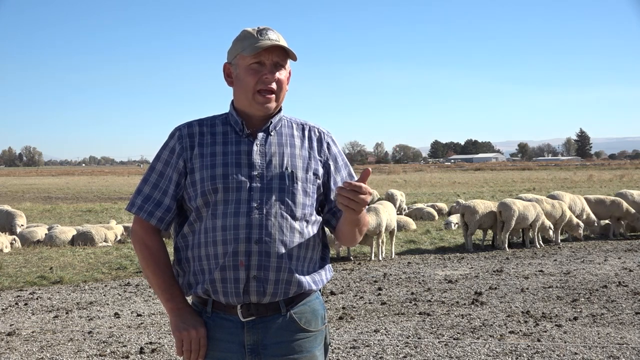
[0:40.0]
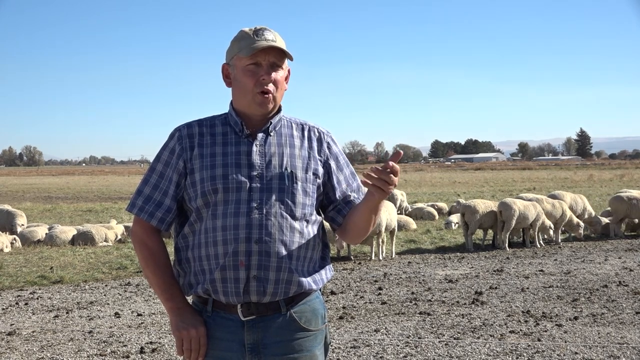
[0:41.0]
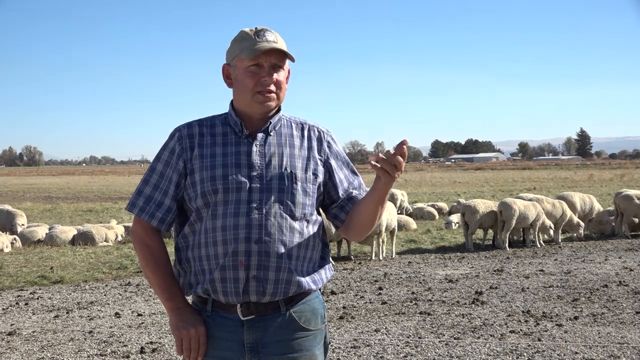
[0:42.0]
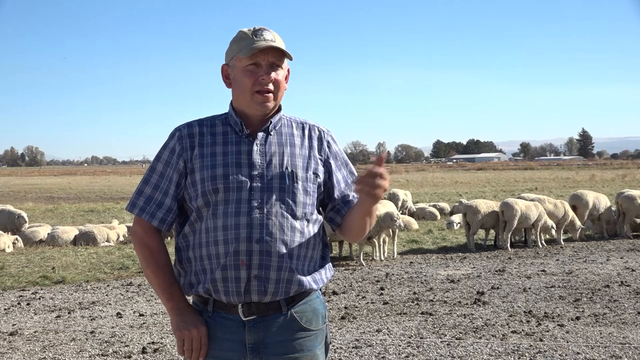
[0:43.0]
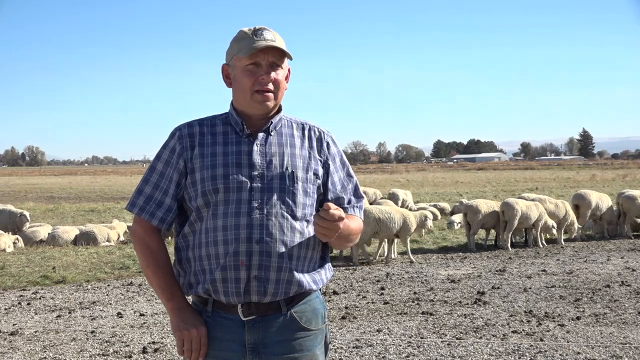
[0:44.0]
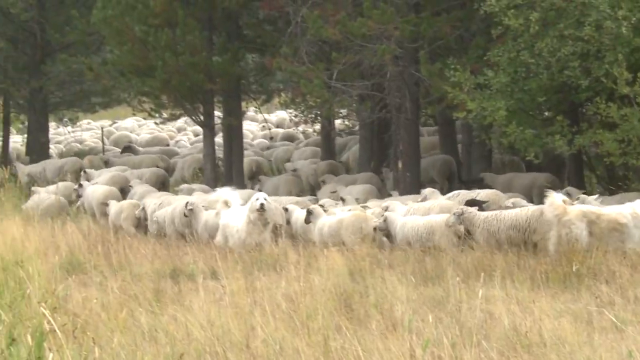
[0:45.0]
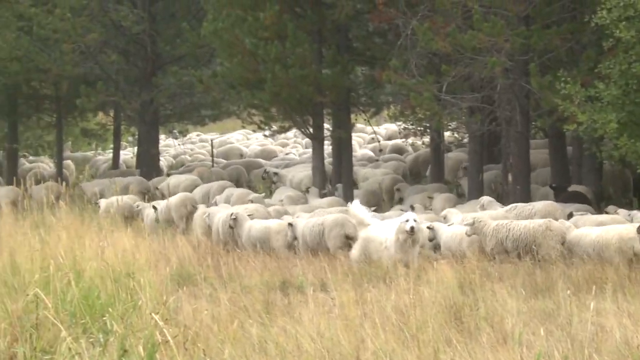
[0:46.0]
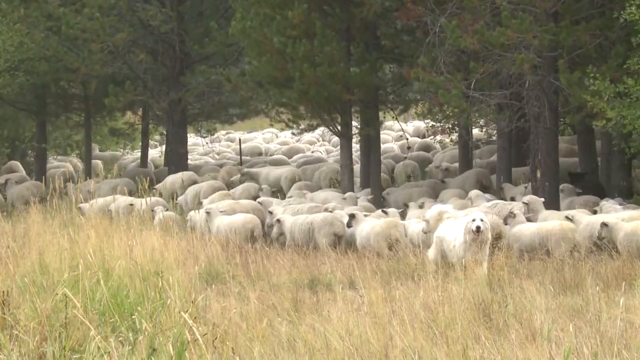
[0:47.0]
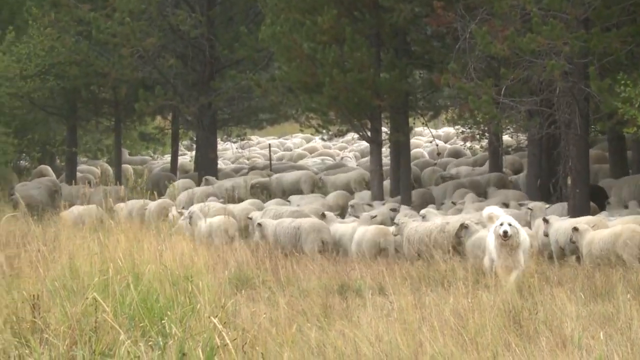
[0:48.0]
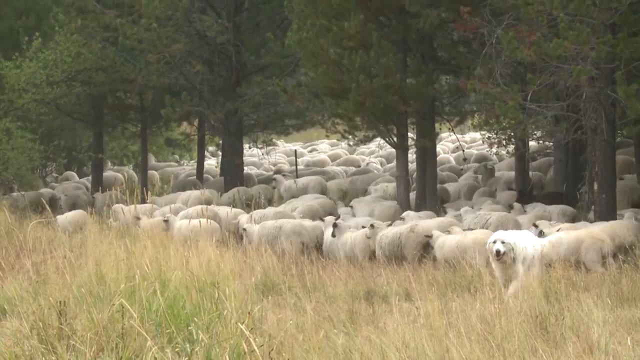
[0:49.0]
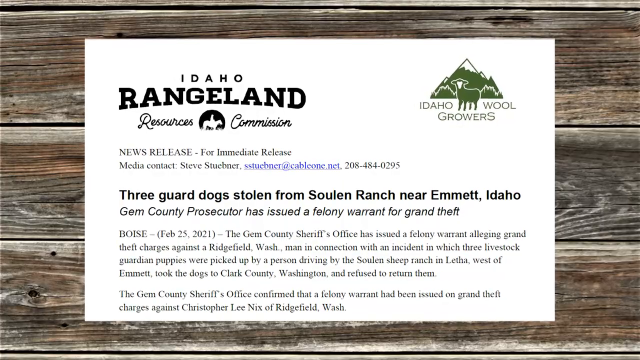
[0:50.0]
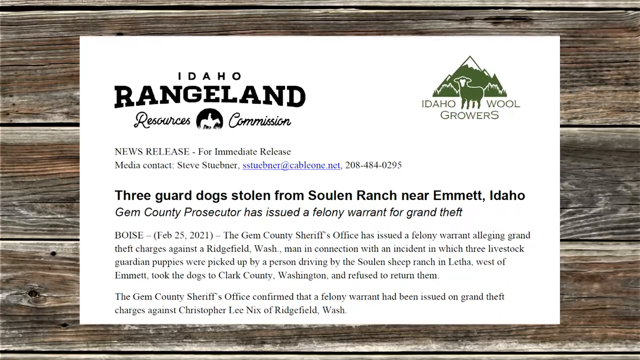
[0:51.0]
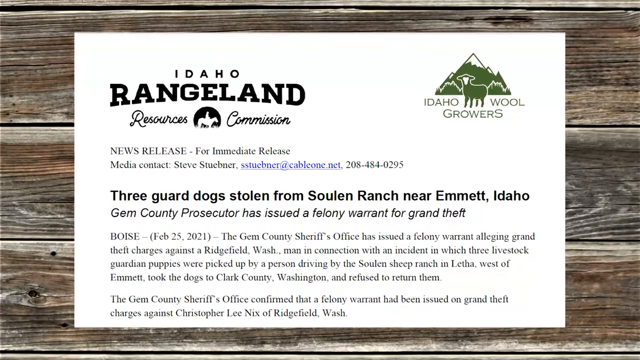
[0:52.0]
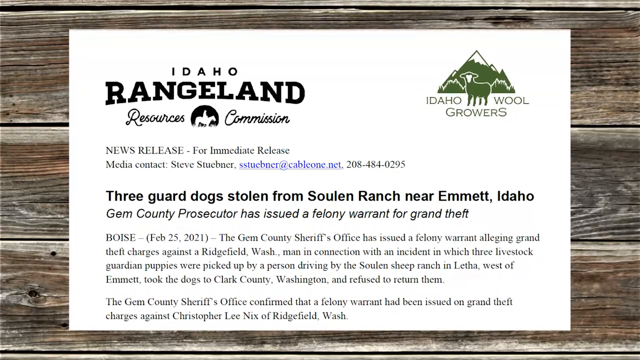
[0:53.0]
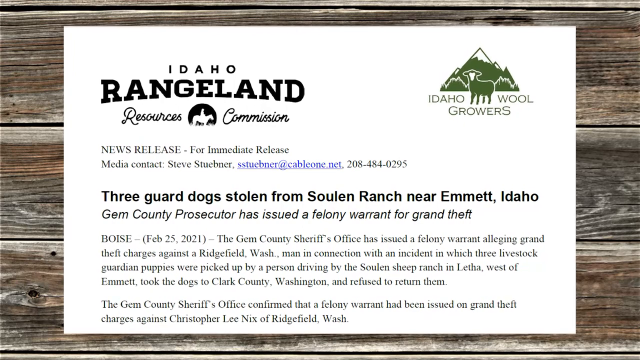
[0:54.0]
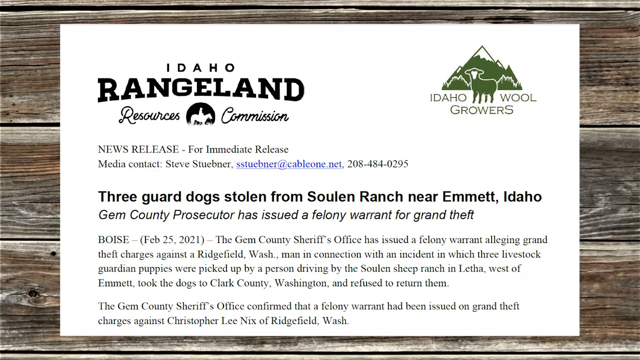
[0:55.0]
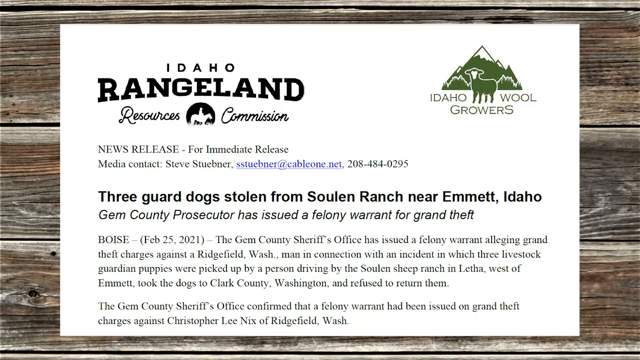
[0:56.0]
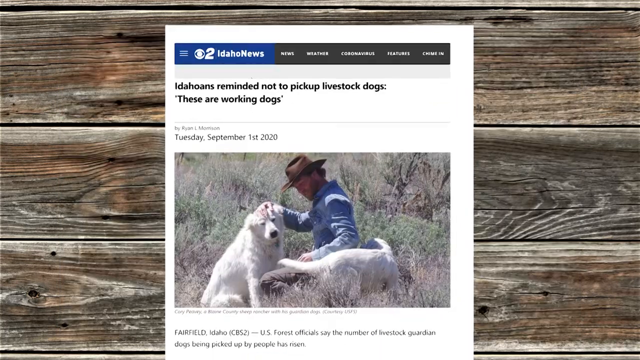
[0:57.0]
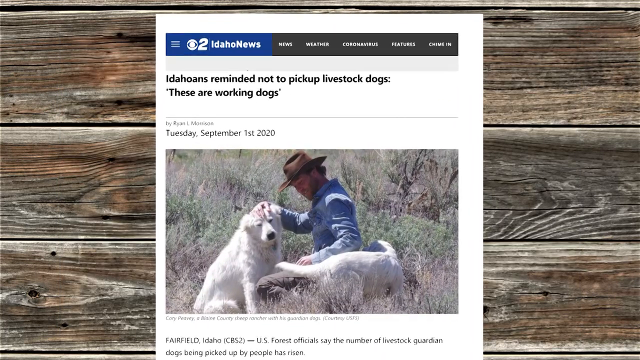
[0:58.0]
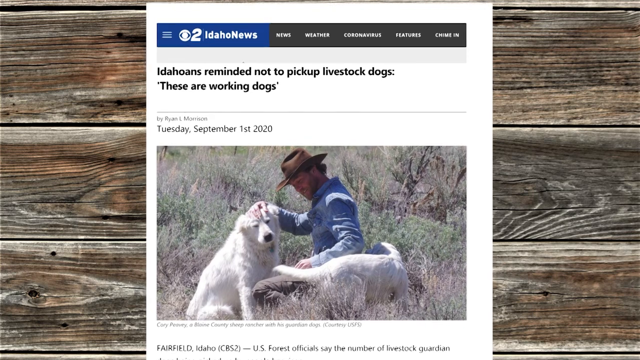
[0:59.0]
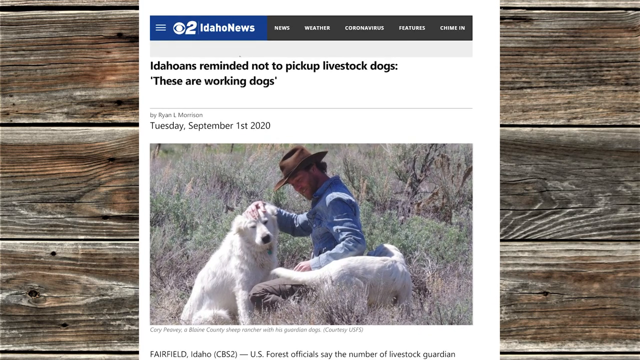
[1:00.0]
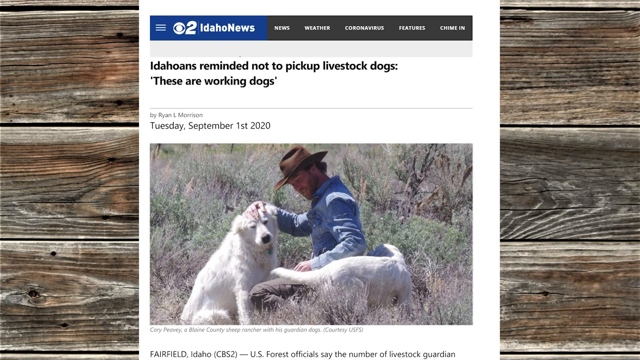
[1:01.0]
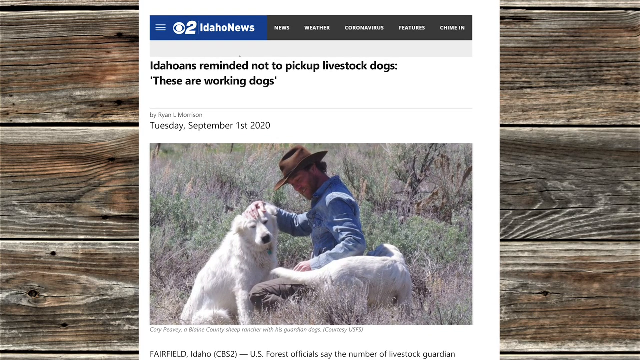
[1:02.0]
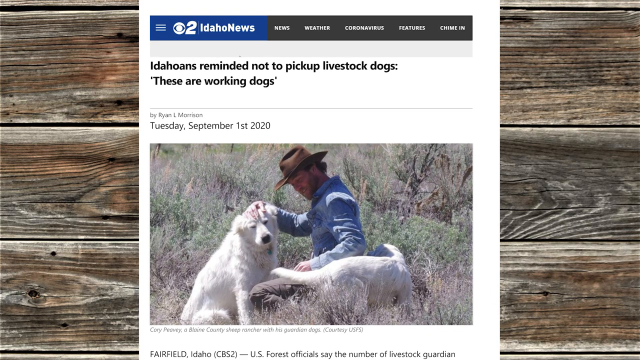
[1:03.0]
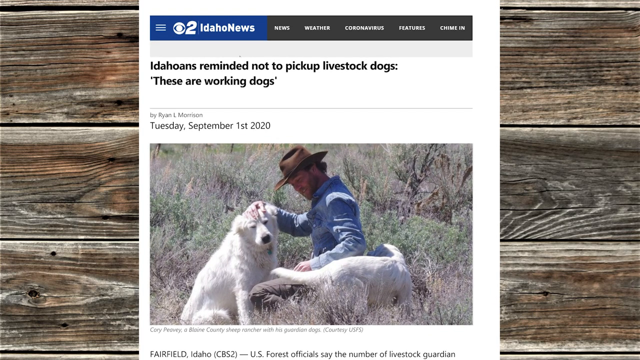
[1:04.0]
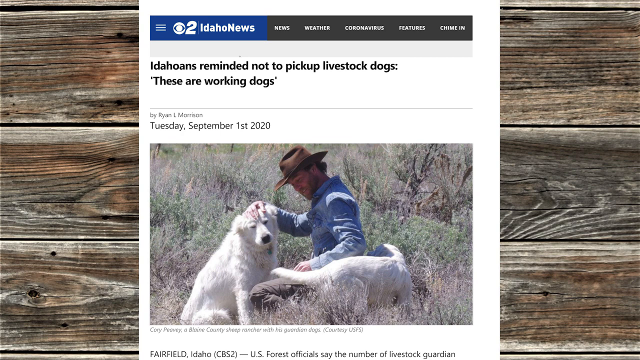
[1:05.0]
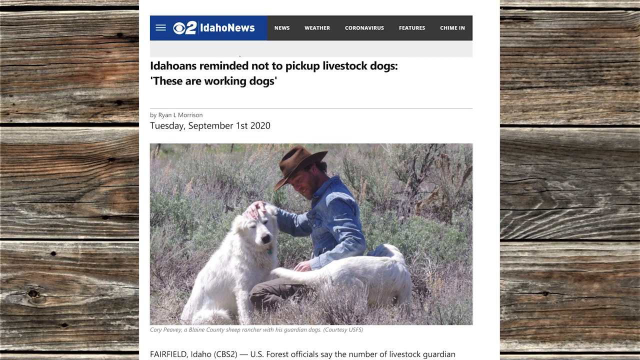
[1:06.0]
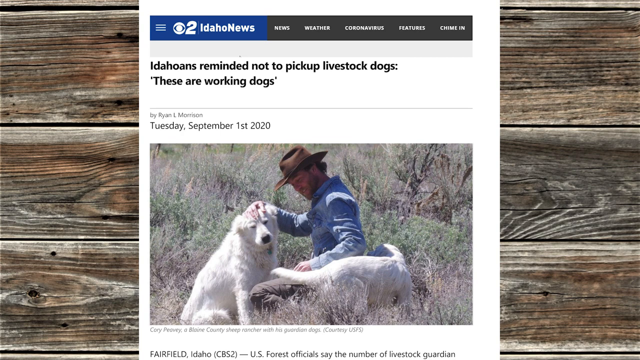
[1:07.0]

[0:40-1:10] The gentleman is still talking. A large herd of sheep moves in one direction through long grass while the guard dog goes the opposite direction. There are green trees, but the grass is weathered and dry. The dog looks around. A news release appears with the text "Idaho range lands resources commission news release for immediate release", a media contact with the email "stubner@cableone.net", and the phone number "208-484-0295". There is a drawn green sheep surrounded by green mountains. A headline reads "Three guard dogs stolen from Soulen Ranch near Emmett, Idaho", and the text below mentions a felony warrant issued on February 25th 2021 in connection with three livestock guardian puppies that were taken to Clark County, Washington, and not returned. Behind the letter is a wood wall. A headline from CBS2 Idaho News says that Idahoans are "reminded not to pick up livestock dogs". A man wearing a brown cowboy hat and a blue shirt is with two white dogs.